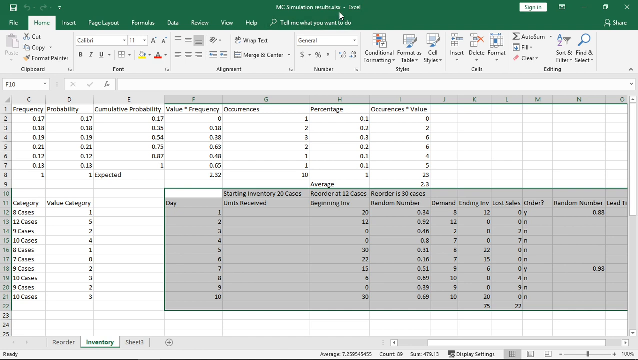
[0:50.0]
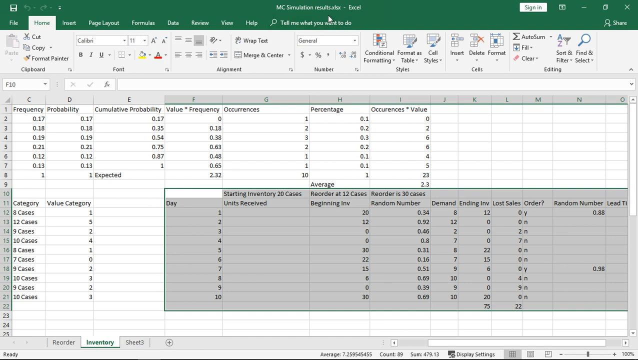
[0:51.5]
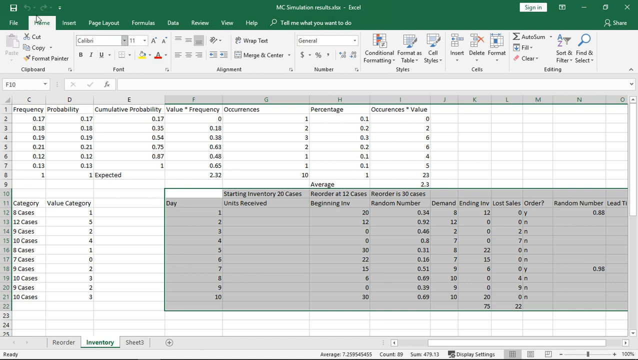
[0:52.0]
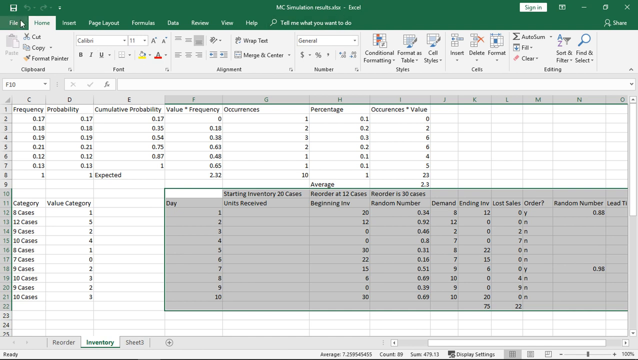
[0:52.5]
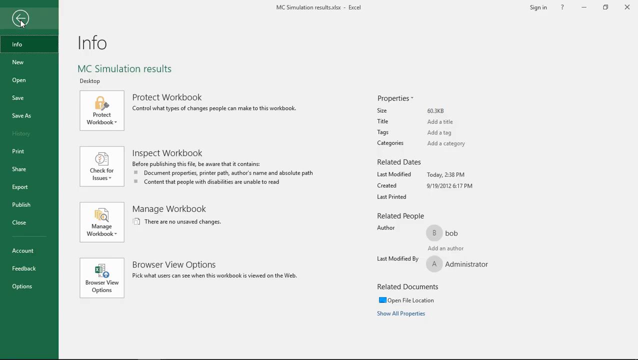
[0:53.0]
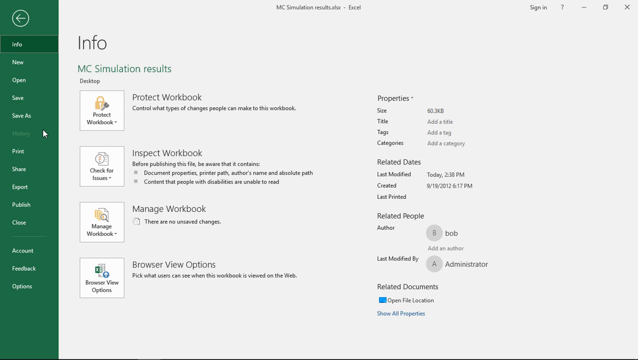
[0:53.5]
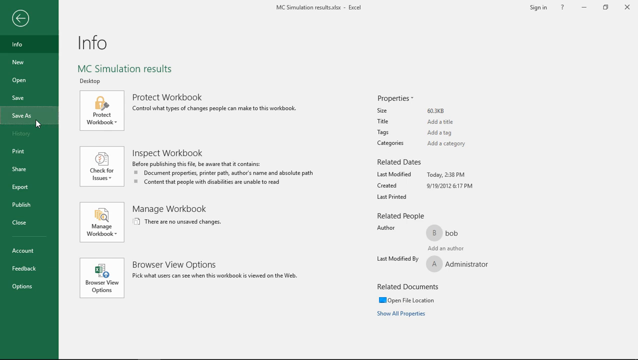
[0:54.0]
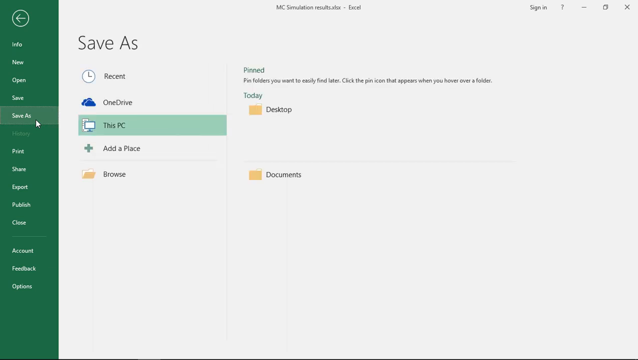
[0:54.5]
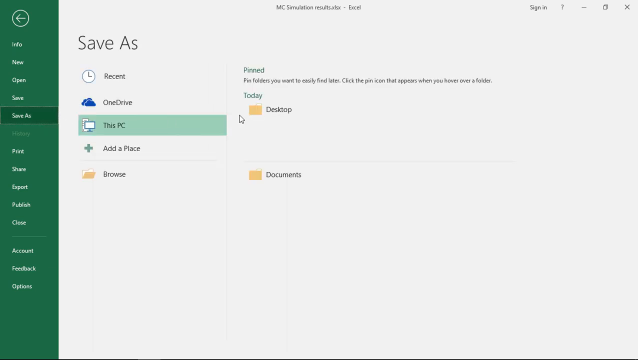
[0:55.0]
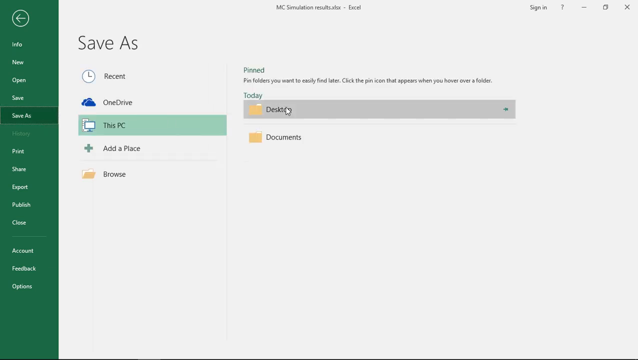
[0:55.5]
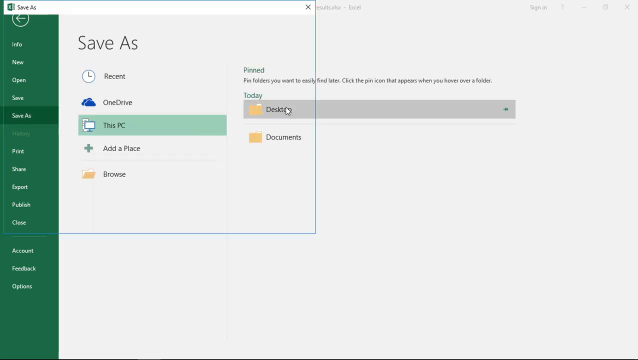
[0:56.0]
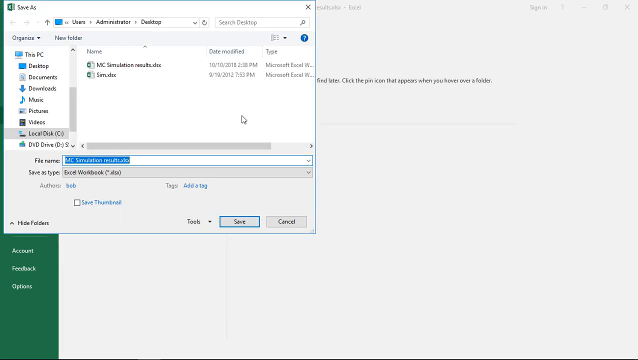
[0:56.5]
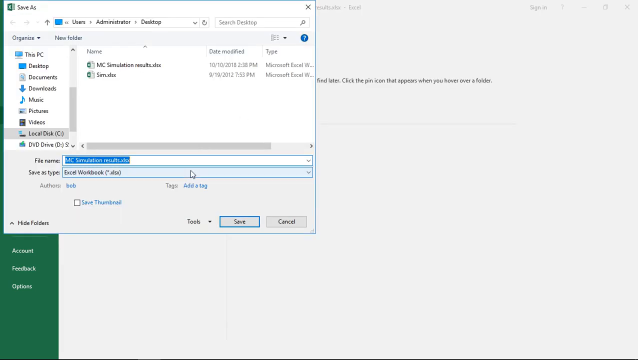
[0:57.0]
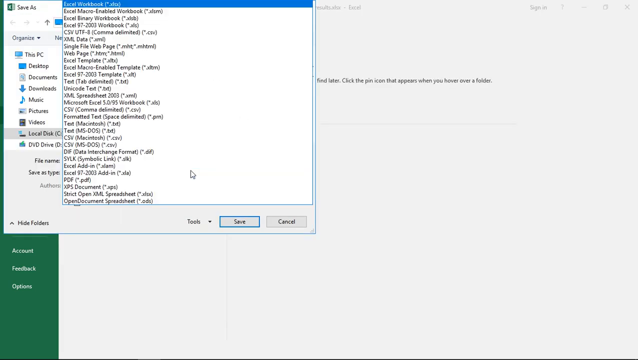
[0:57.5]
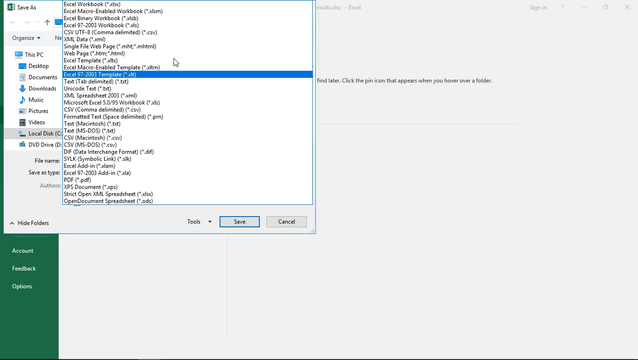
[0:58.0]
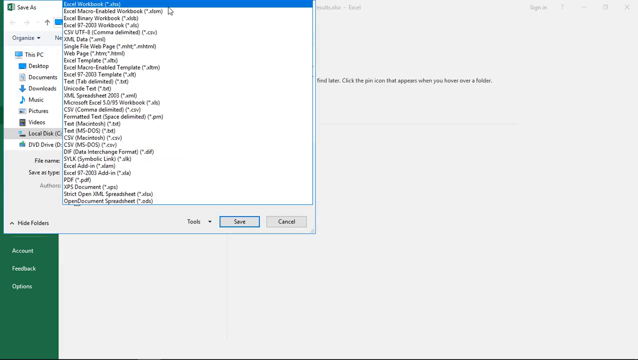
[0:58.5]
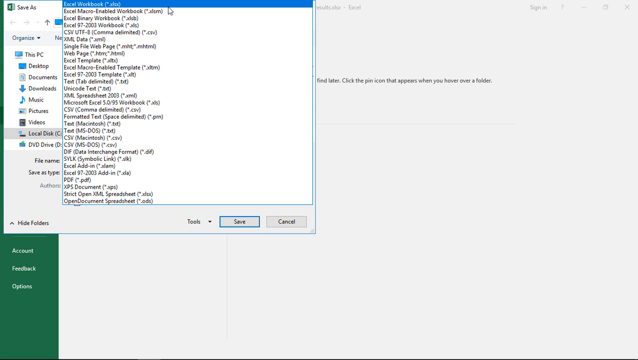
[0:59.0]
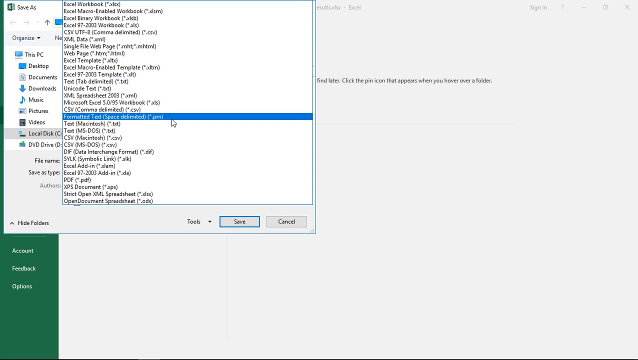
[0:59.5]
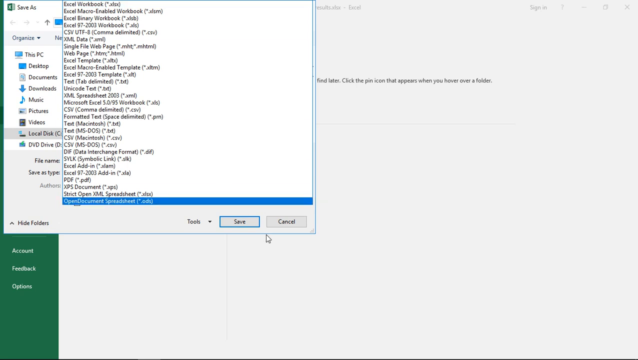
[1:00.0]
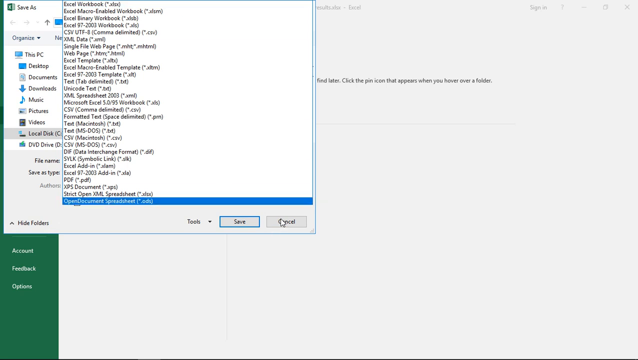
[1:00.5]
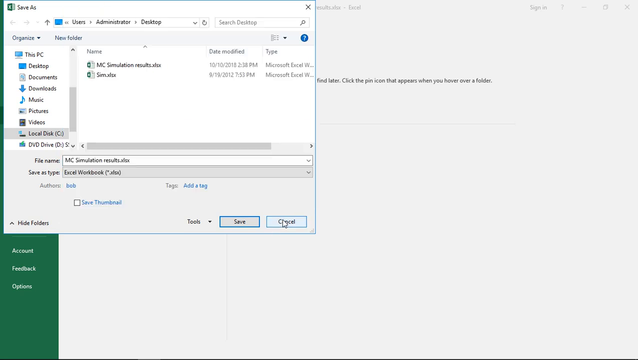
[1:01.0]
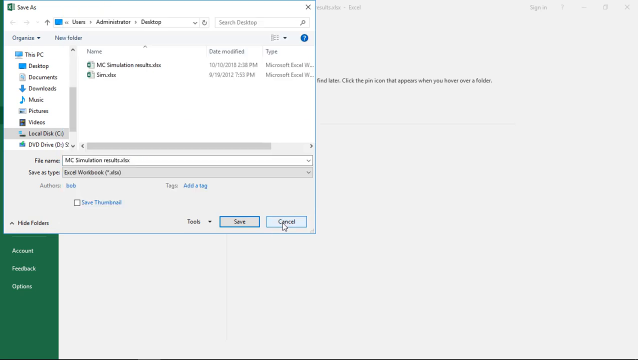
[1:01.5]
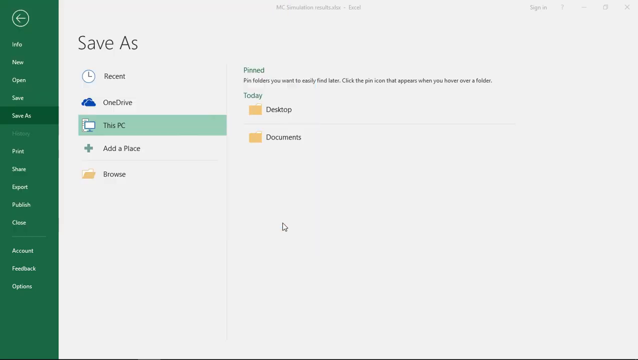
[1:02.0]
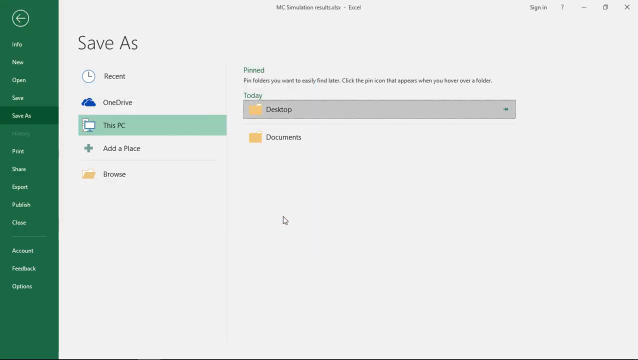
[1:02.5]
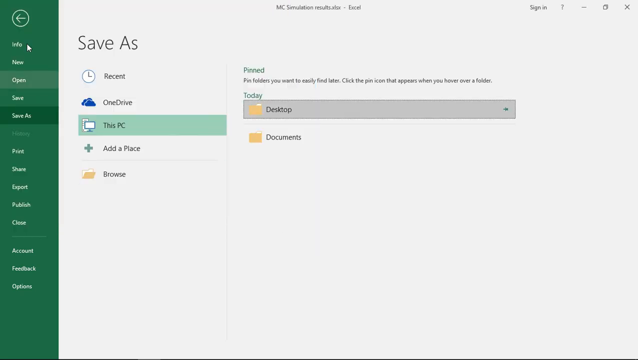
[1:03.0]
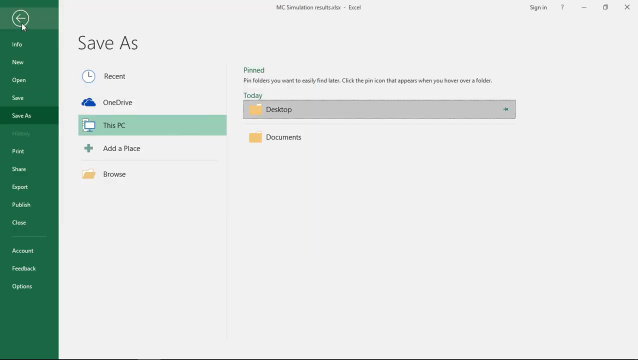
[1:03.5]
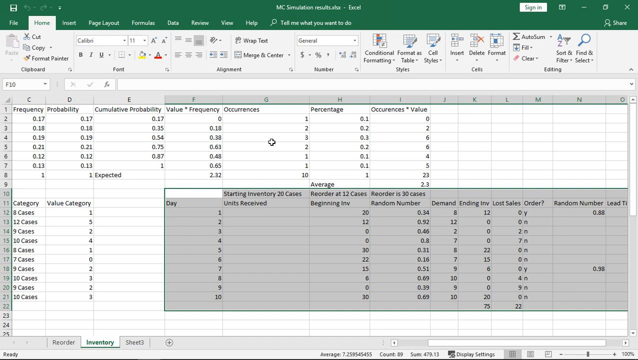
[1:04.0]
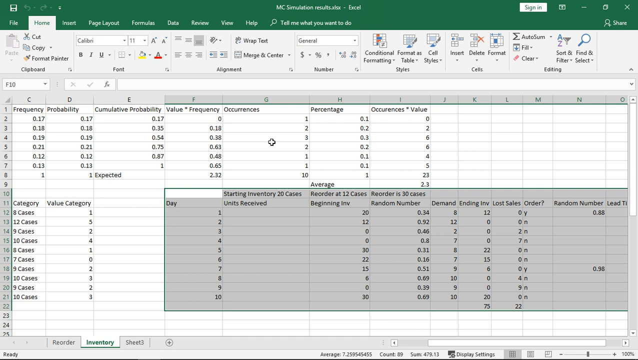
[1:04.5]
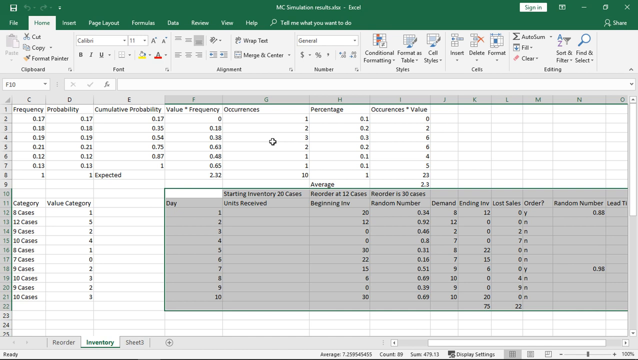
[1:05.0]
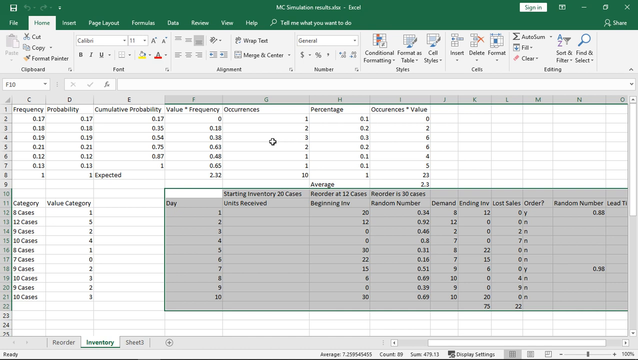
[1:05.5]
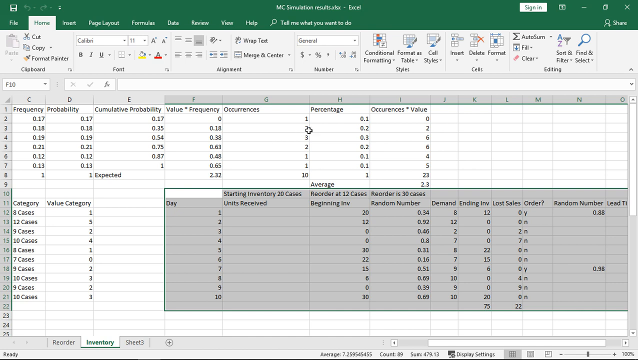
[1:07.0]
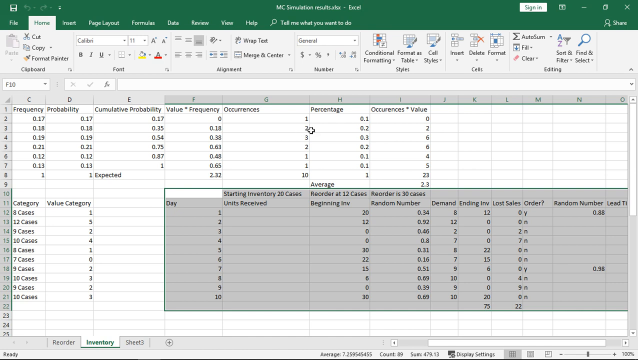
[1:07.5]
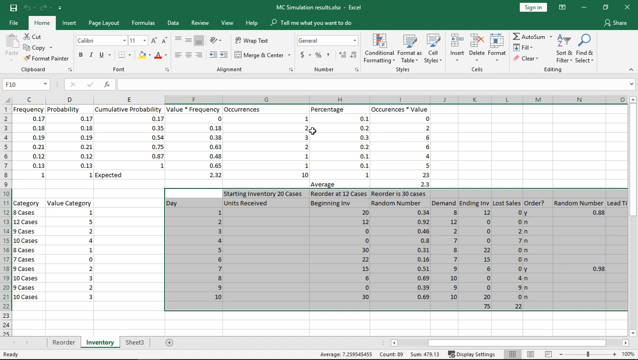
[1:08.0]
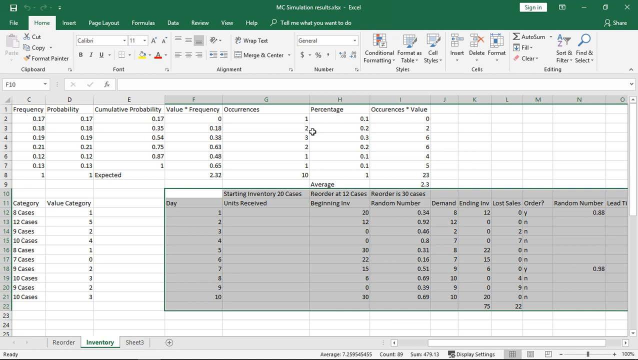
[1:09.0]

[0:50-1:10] A file view is shown, and then cancel is pressed. The video goes back to the Excel sheet. The file is then saved to the desktop: Save As is selected, the desktop is chosen, and a name is typed in for the file.